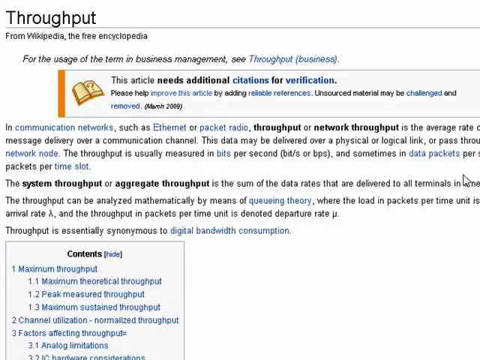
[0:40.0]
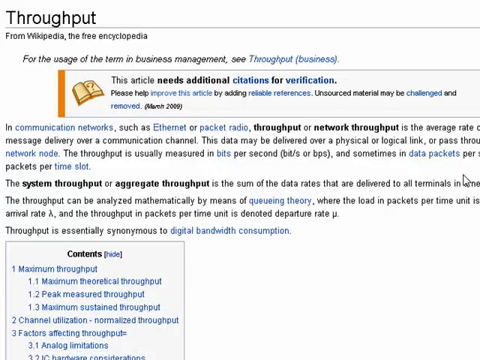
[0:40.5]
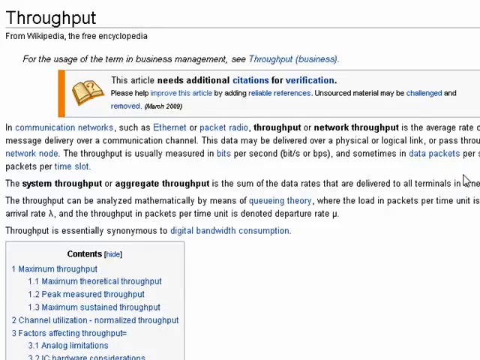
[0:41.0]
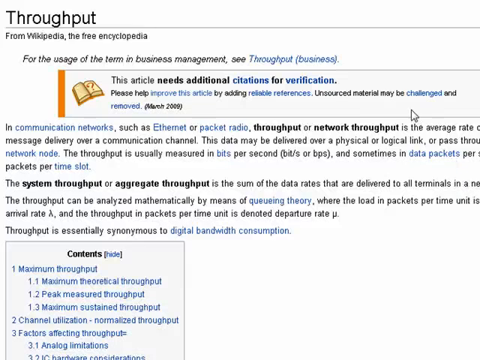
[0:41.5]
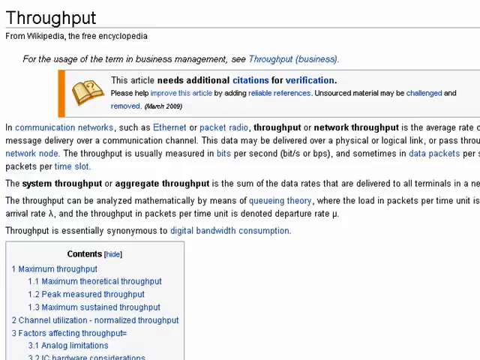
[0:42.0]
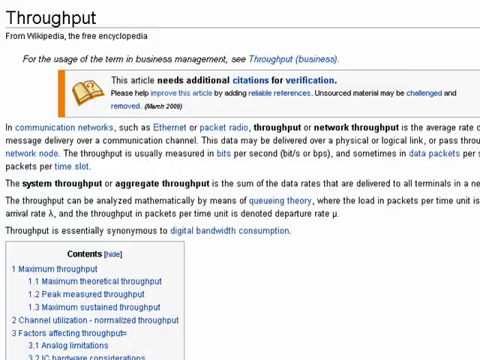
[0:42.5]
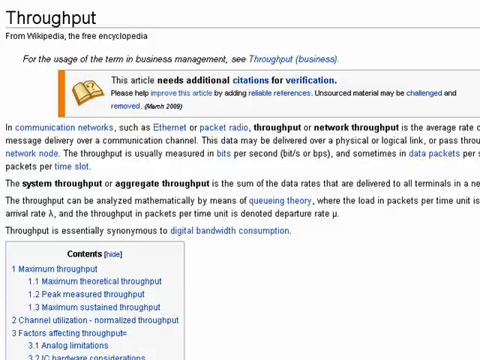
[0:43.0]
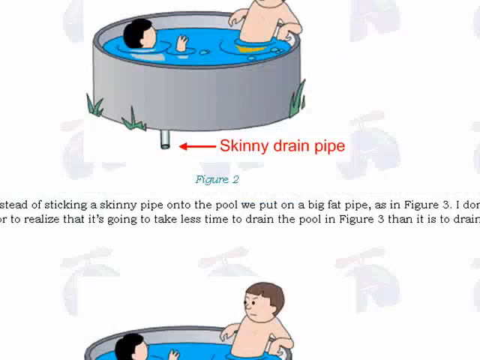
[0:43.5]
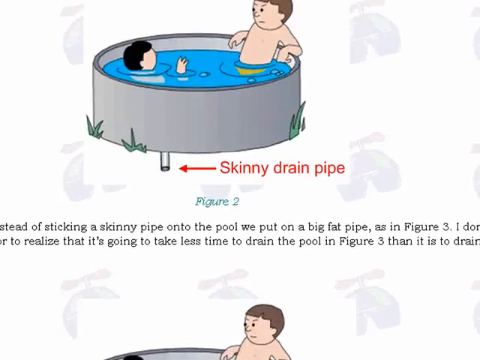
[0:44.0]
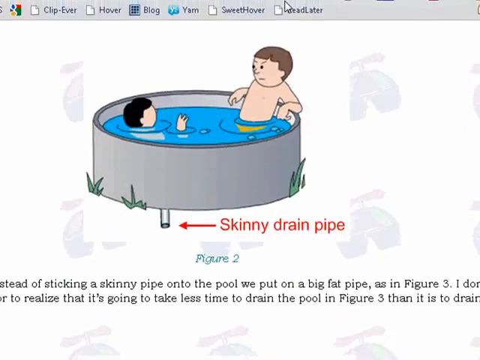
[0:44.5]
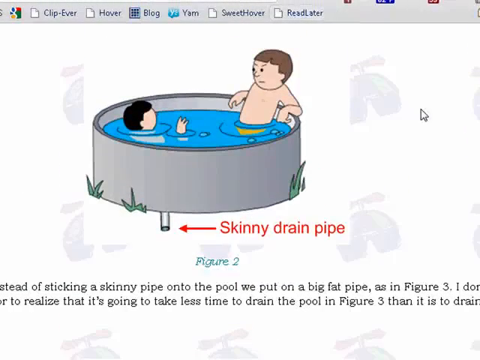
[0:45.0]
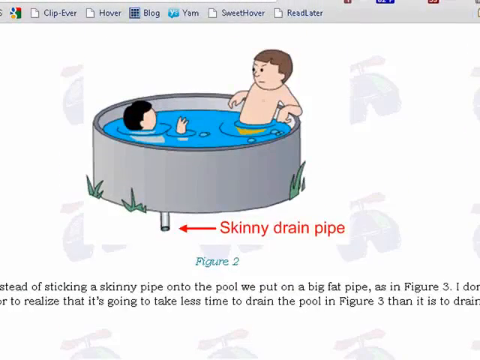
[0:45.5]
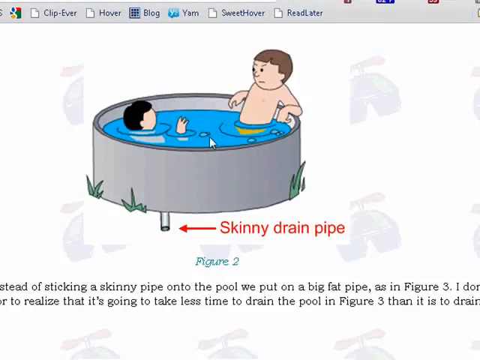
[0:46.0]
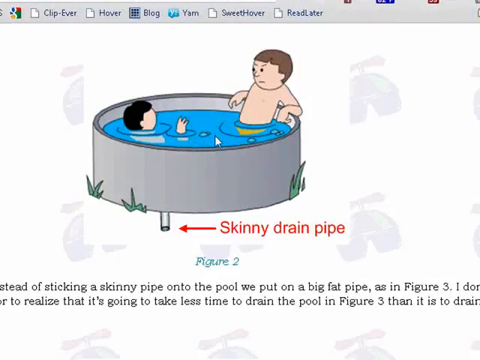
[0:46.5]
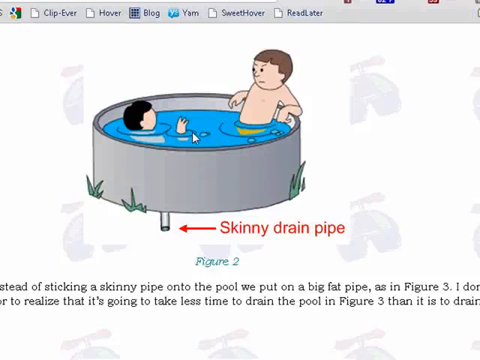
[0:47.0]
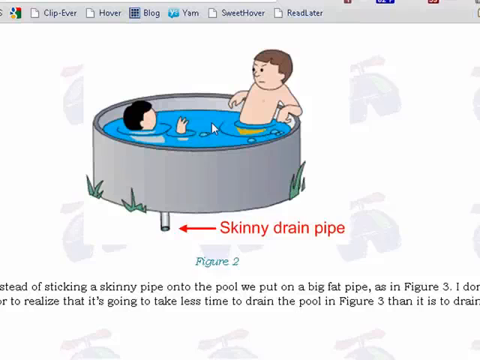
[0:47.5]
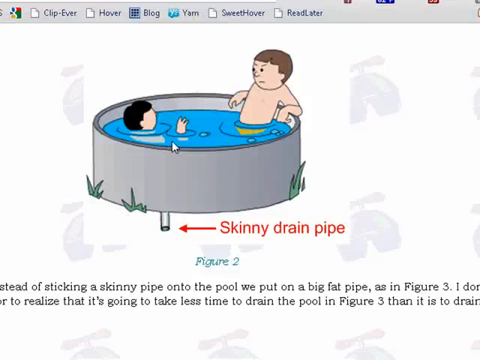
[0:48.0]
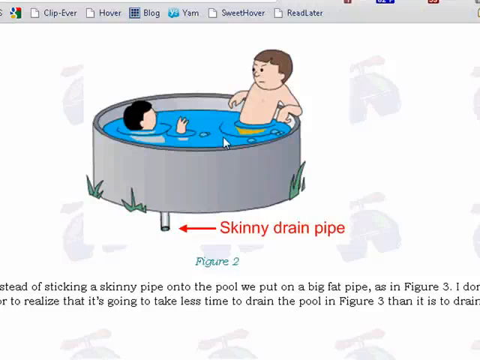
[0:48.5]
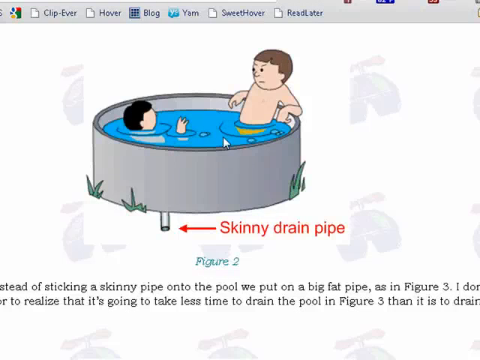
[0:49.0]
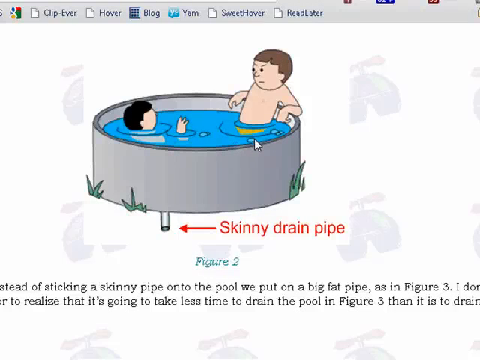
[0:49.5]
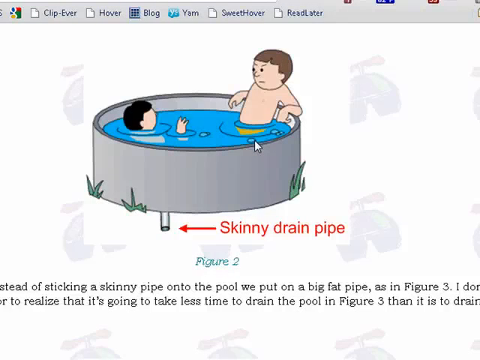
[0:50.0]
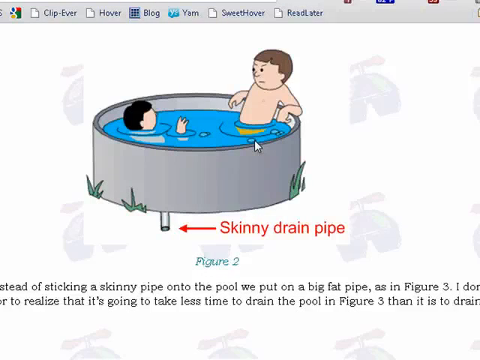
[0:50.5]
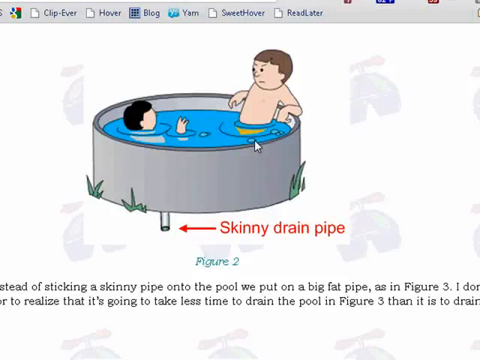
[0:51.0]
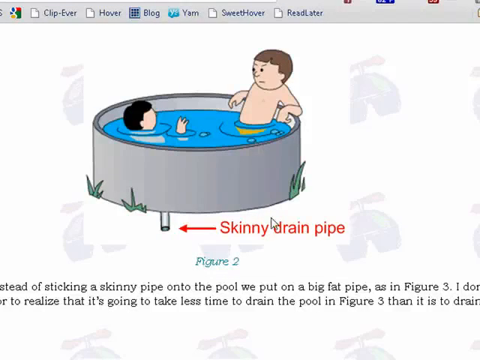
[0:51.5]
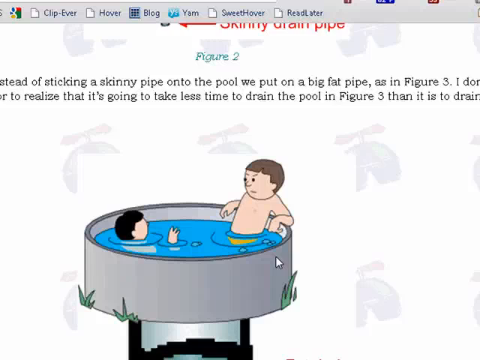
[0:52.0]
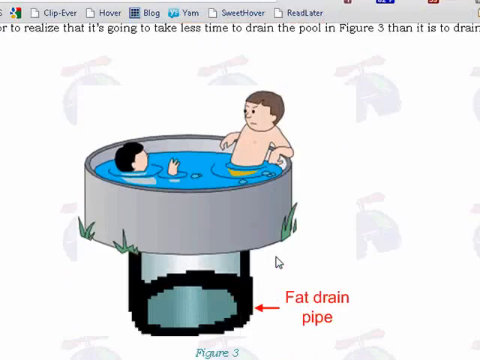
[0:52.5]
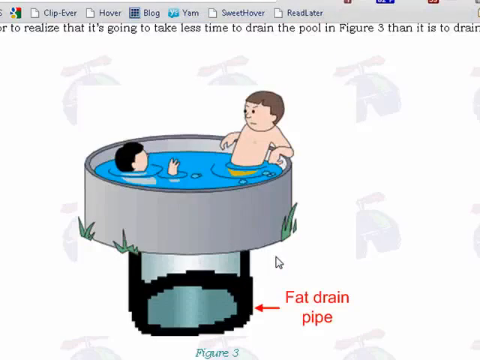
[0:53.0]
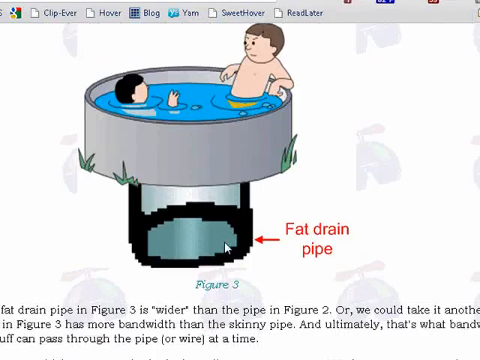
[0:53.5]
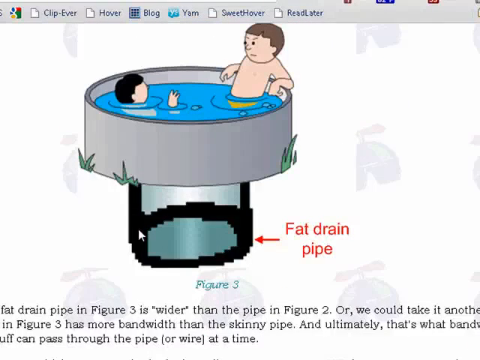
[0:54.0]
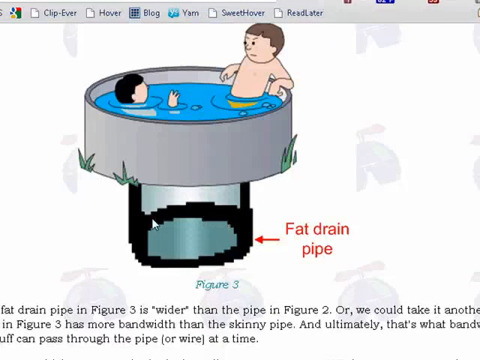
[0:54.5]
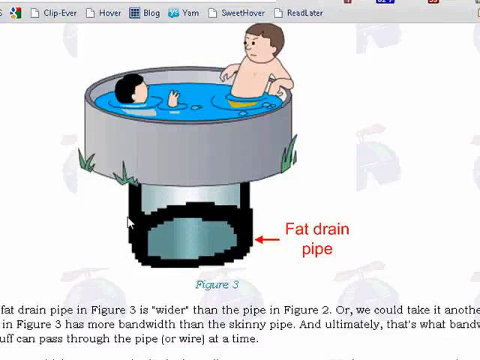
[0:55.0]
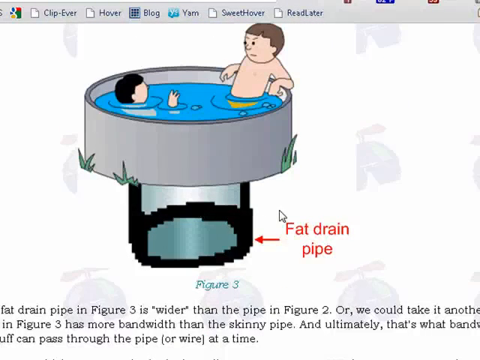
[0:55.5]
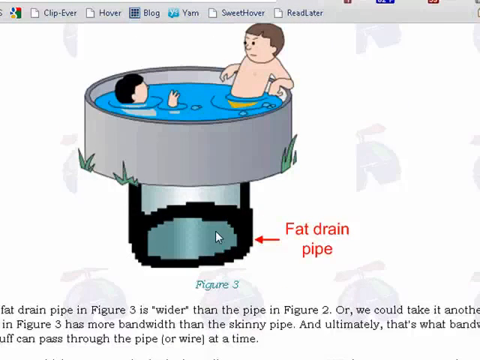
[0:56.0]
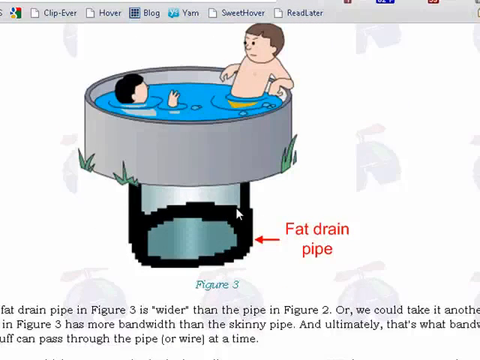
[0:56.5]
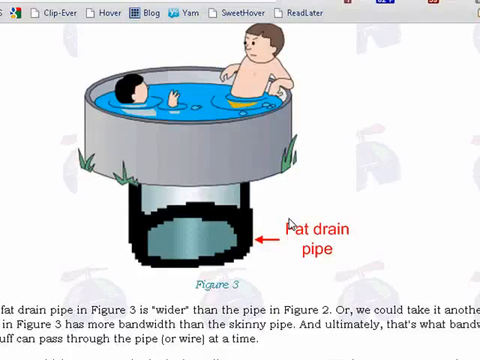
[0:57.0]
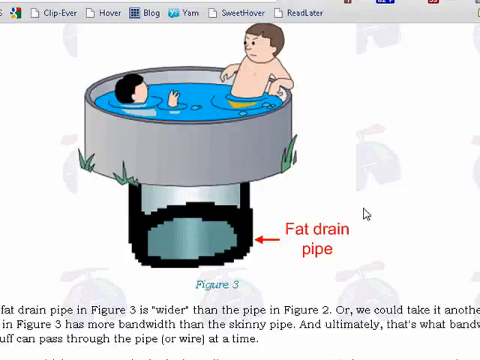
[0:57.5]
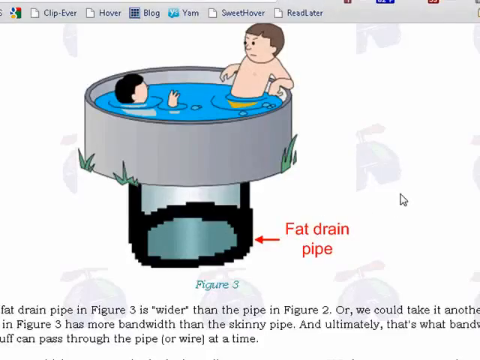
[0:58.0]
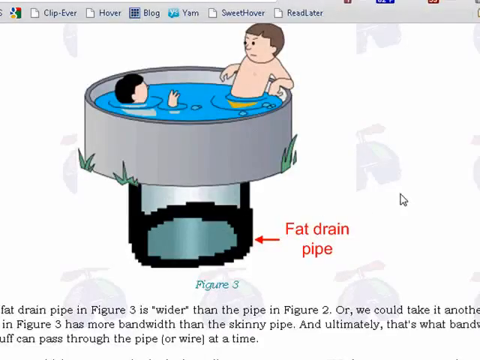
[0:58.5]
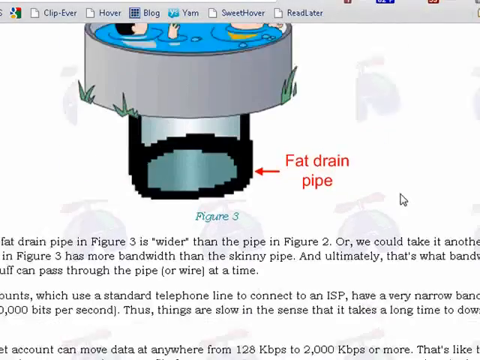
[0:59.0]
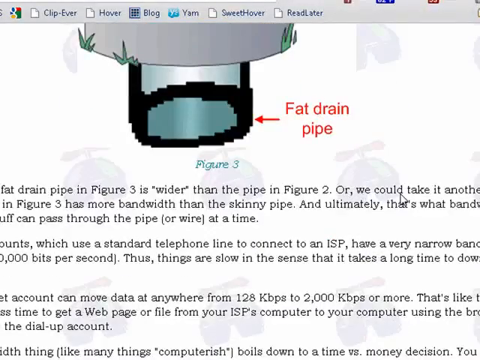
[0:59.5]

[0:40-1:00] "Throughput" is at the top left corner, with a couple of lines of information below it. About two inches from the left, a rectangle with an orange border extends off the right side; it has a book inside it and some information about the article. Two paragraphs of information follow, with blue links scattered throughout, and the contents is in the bottom left corner. The cursor, in the center, moves up off the top of the screen. The page scrolls down a little, then back up just a hair. In the center is a drawing of a gray swimming pool. On the left, just the top of the head of a little kid with black hair is visible, his hand sticking up in front of him. Across from him on the right is a figure with brown hair, probably an older-looking kid, with a little scowl, his arms going down with elbows up, resting on the edge. At the bottom of the pool a little pipe sticks down, and a red arrow from the right points left at it, labeled "skinny drain pipe." Below that is "figure two," followed by a paragraph of information. The cursor is above the pool where the water is and moves back and forth, then to the bottom edge of the pool. The page scrolls down to a similar section, except that underneath the pool is a really big drain pipe reaching to about two inches from the edge of the pool on both sides, labeled on the right "fat drain pipe" with an arrow pointing to it. The cursor is on the fat drain pipe, moves off it, moves back and forth a little, and the page scrolls toward the right side and then down a little more.